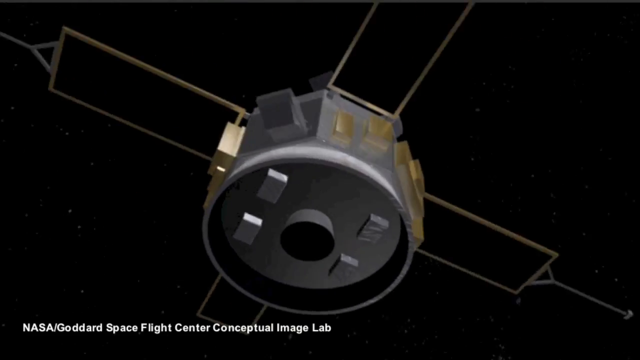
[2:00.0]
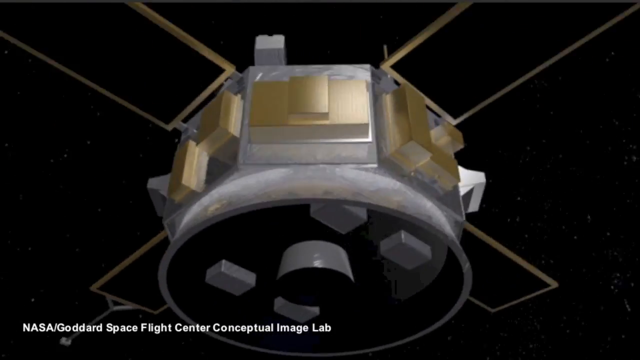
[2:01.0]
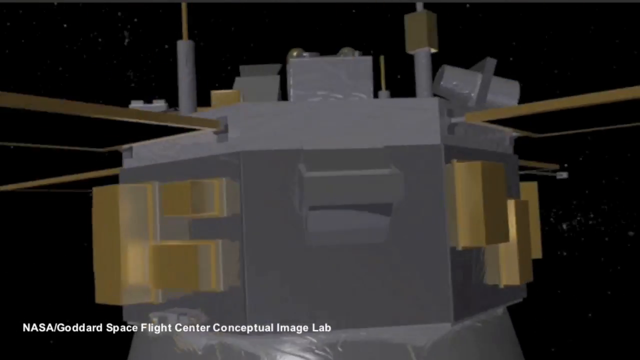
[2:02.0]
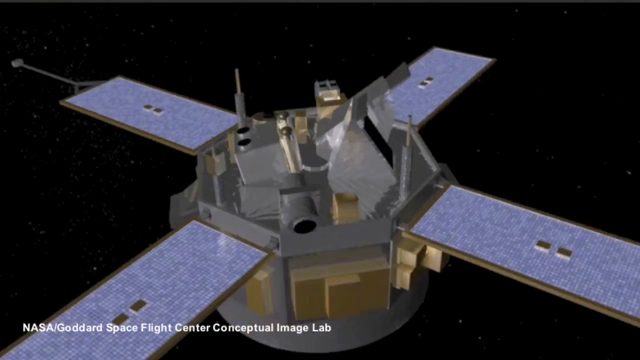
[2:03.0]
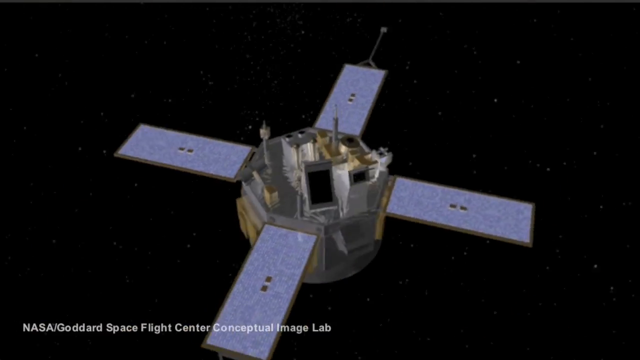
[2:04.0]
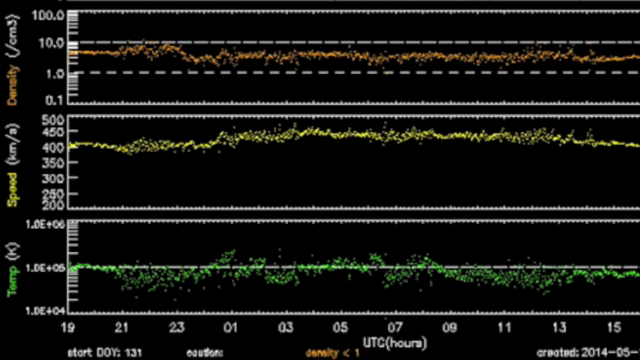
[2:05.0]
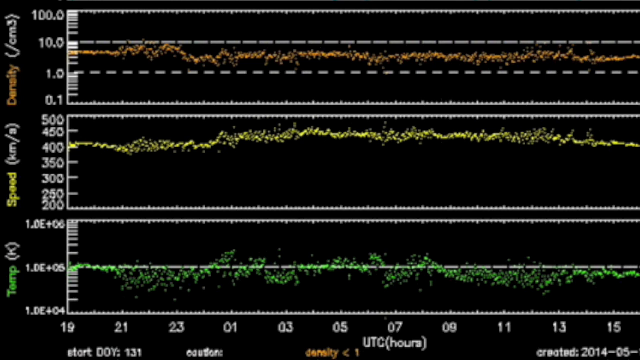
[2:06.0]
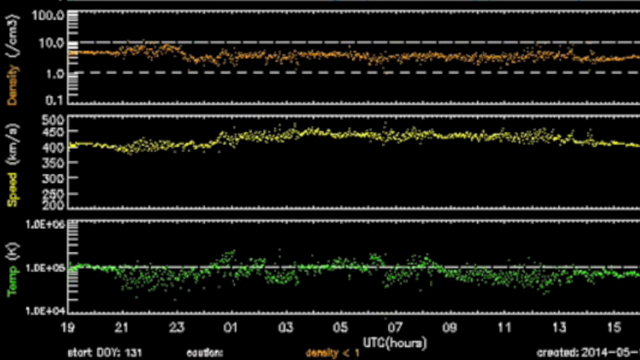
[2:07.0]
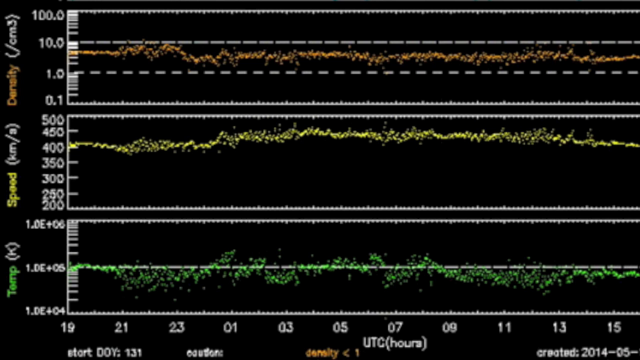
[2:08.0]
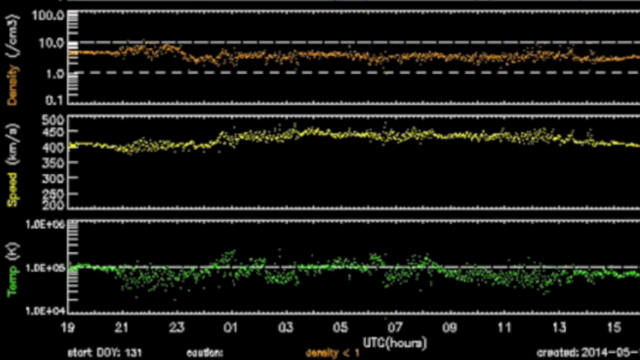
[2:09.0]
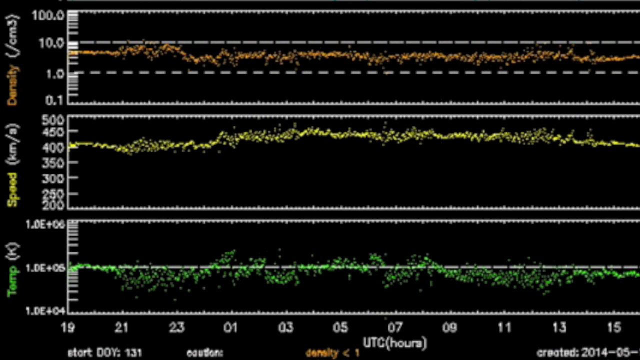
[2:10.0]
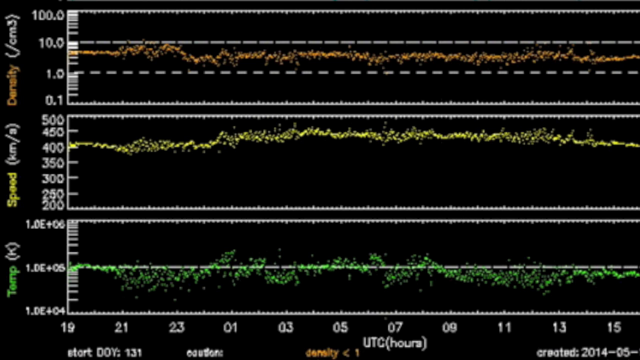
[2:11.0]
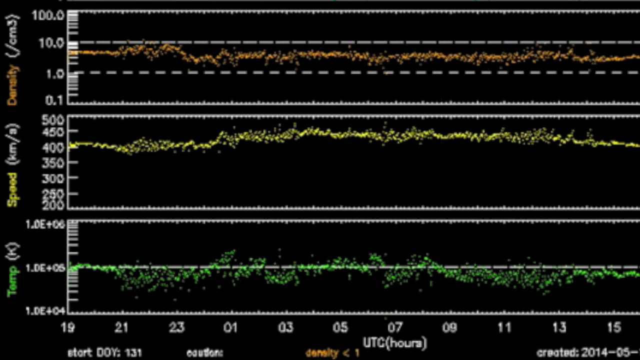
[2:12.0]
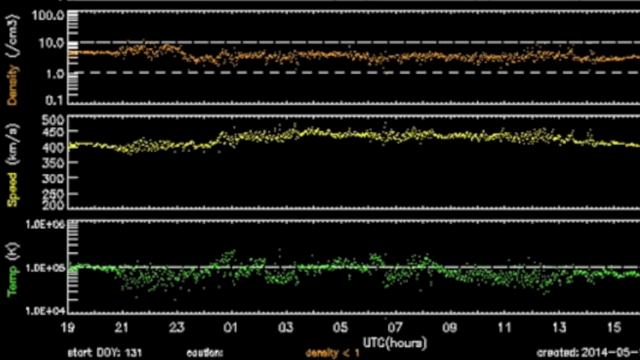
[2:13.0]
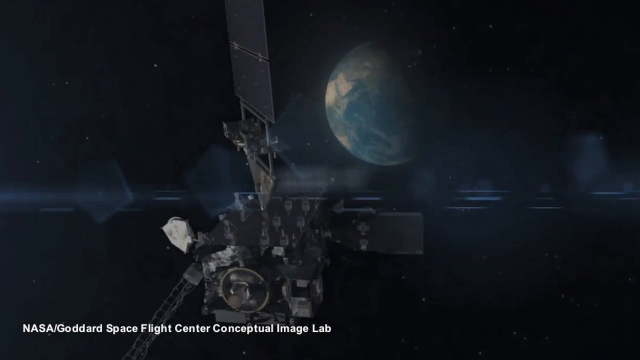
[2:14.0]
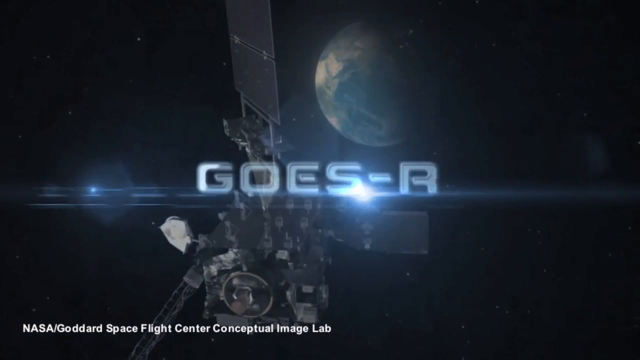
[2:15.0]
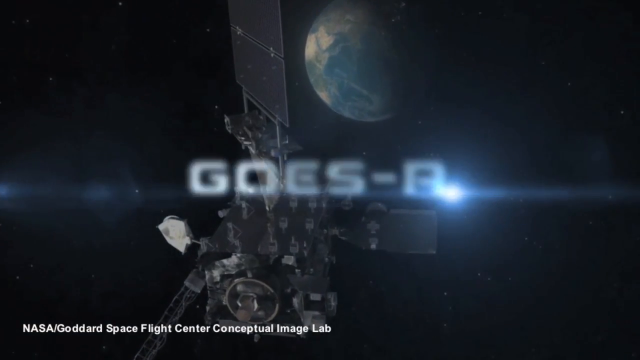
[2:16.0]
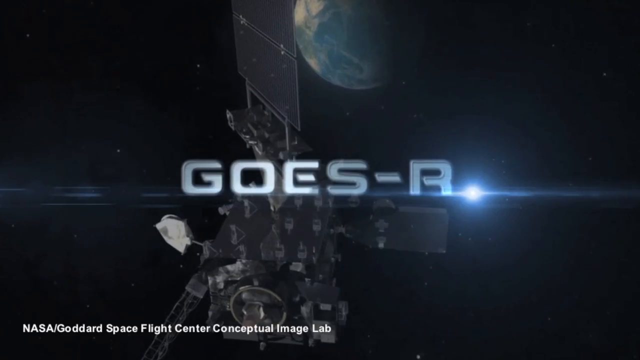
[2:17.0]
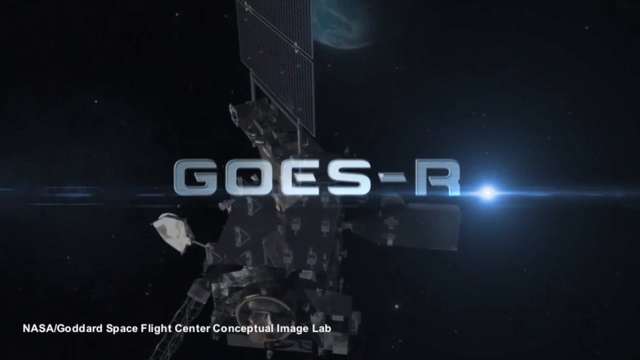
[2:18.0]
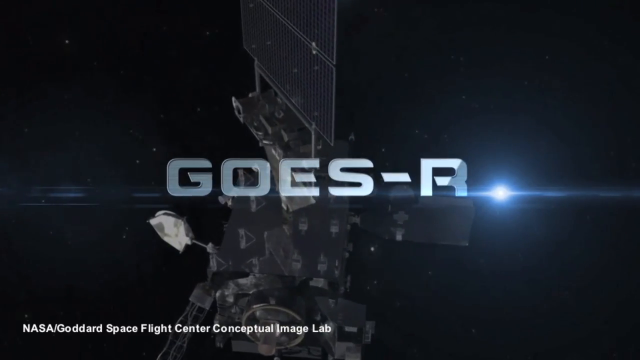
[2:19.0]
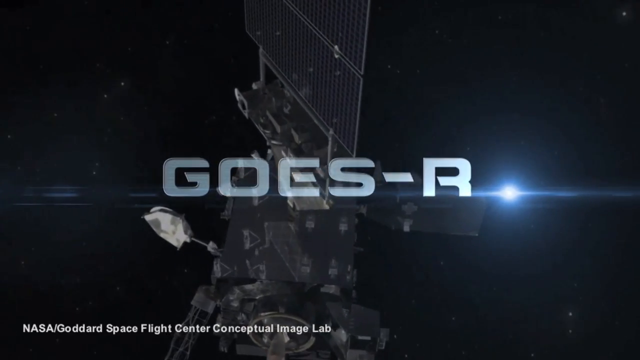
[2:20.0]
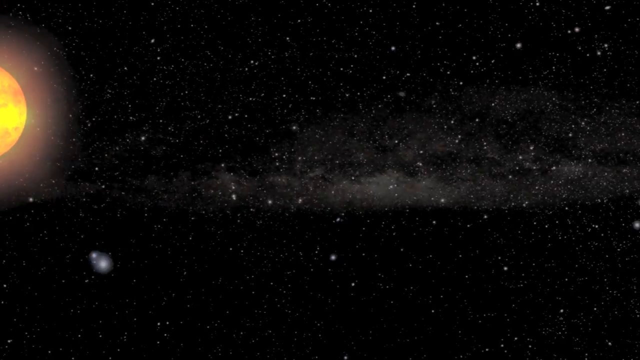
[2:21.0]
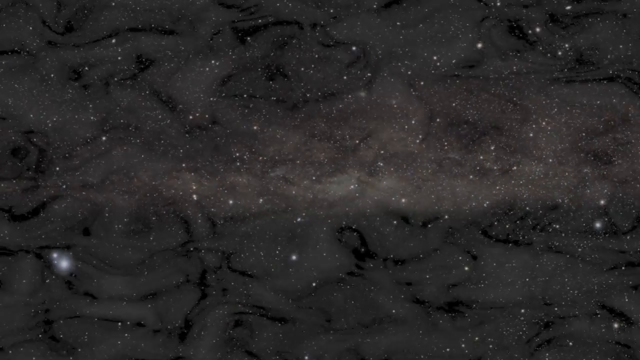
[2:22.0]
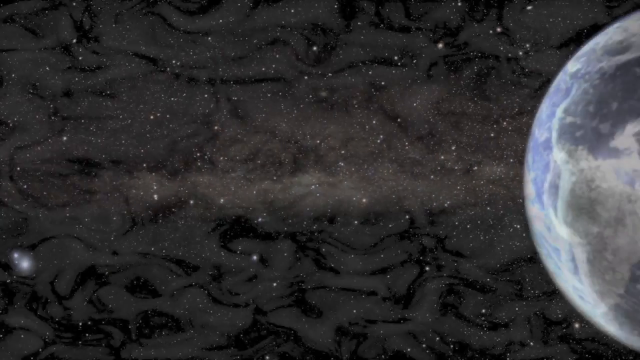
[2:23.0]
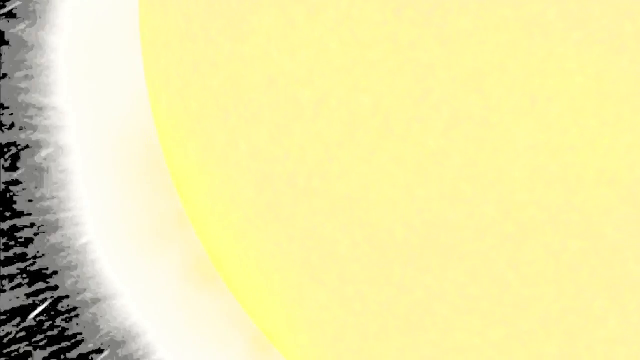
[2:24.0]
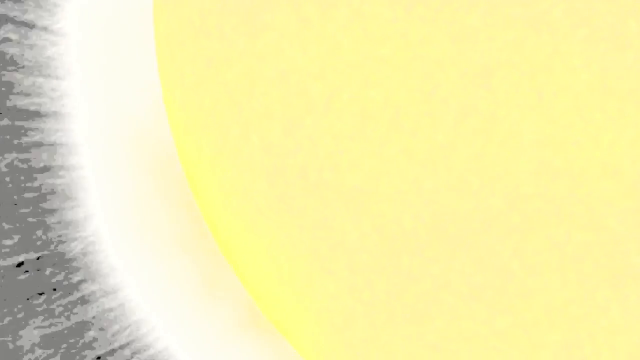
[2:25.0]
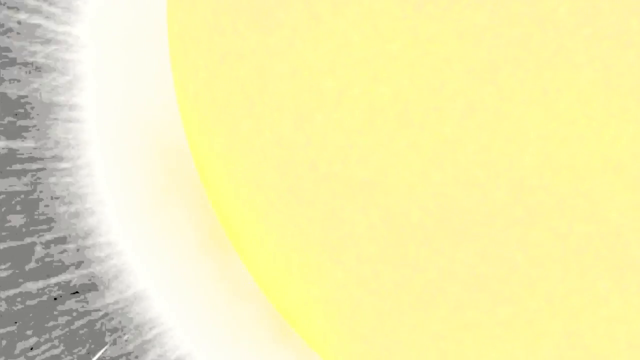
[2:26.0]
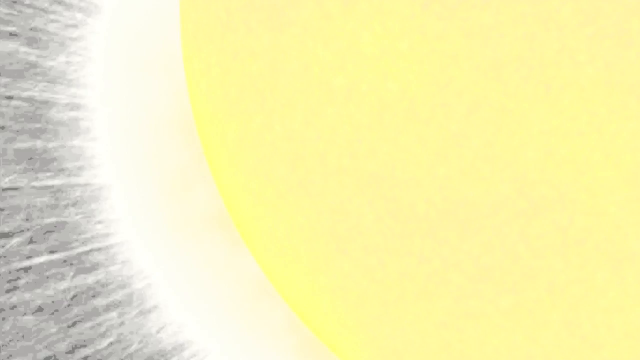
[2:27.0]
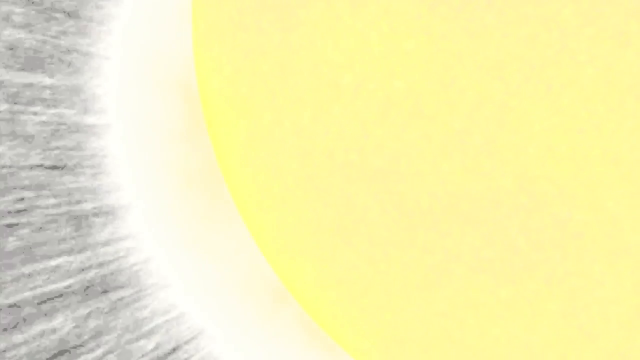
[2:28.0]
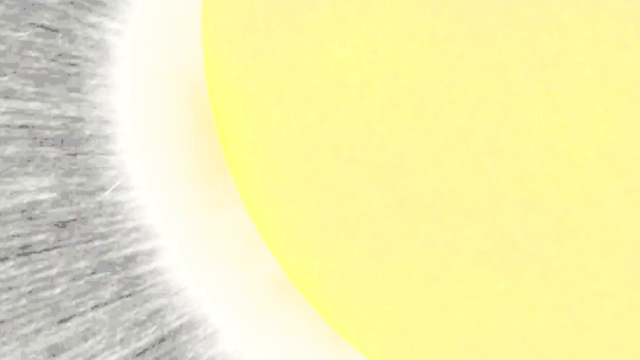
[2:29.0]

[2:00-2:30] A cylinder-shaped satellite slowly spins counterclockwise as the camera slowly zooms in on it. White text at the bottom of the screen reads "NASA/Goddard Space Flight Center Conceptual Image Lab." Four black solar panels extend from the satellite's cylinder body in four different directions, and there are multiple gold-colored boxes on its sides. The camera zooms in closer and closer to a side view, then eventually moves to the other side of the satellite. The solar panels are then shown as blue, with multiple metal instruments on the front of the satellite. The satellite now spins clockwise in a top-down view. The screen then turns into three charts stacked on top of each other: the topmost is orange and labeled "density," the middle is yellow and labeled "speed," and the bottom is green and labeled "temp," with various numbers along the left and bottom of the charts. The footage then changes to a different satellite with text reading "GOES-B." The view zooms in on this satellite, then quickly cuts to a view of the sun and zooms out from it.